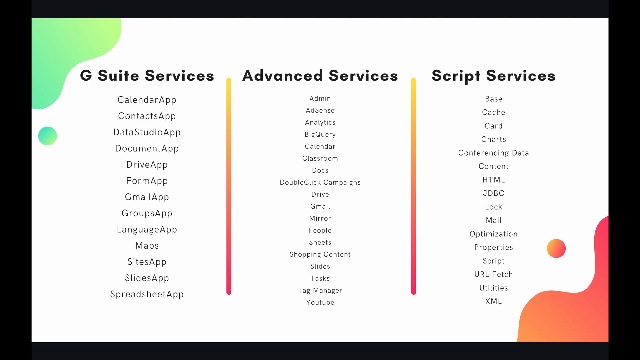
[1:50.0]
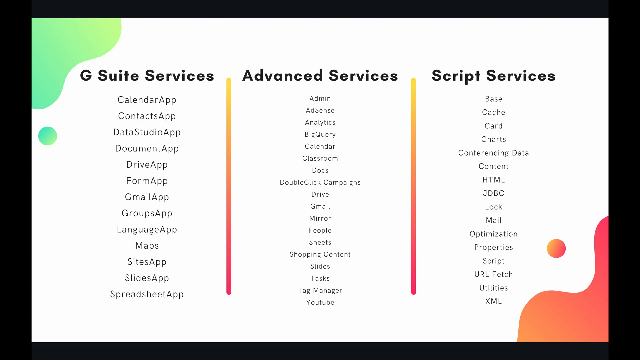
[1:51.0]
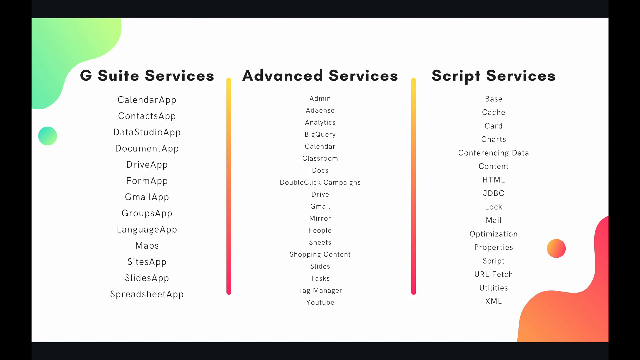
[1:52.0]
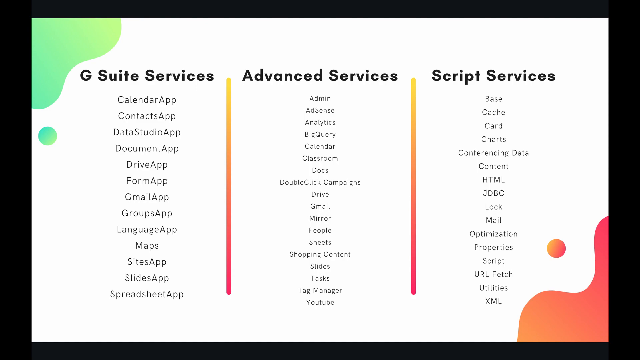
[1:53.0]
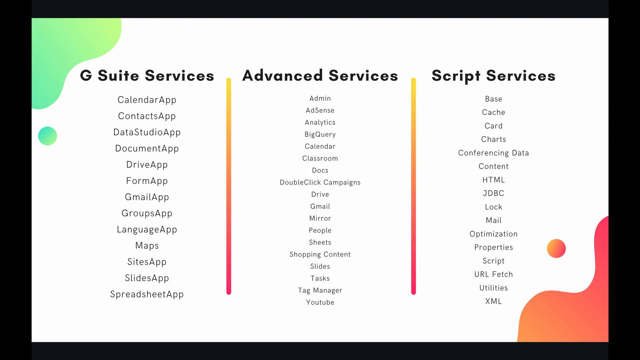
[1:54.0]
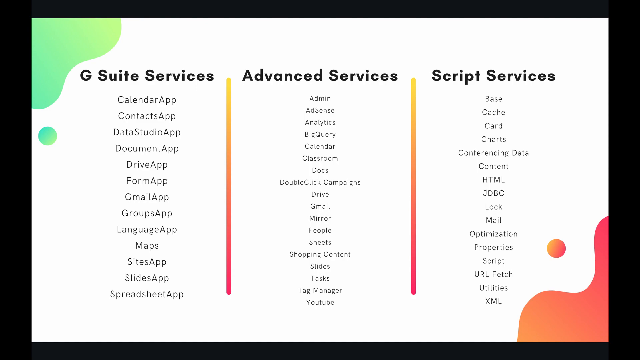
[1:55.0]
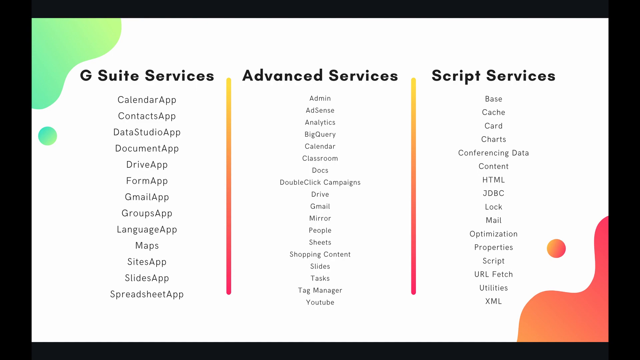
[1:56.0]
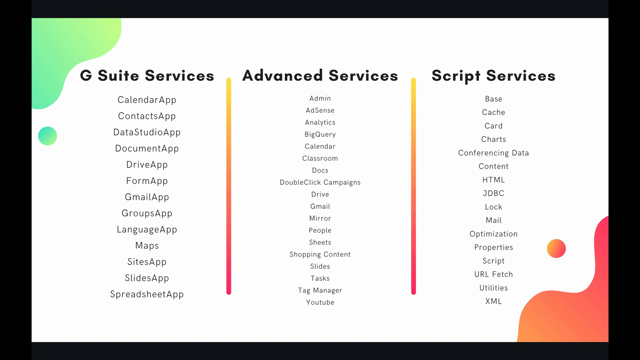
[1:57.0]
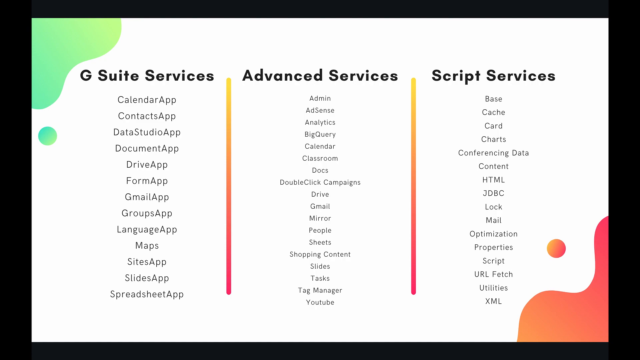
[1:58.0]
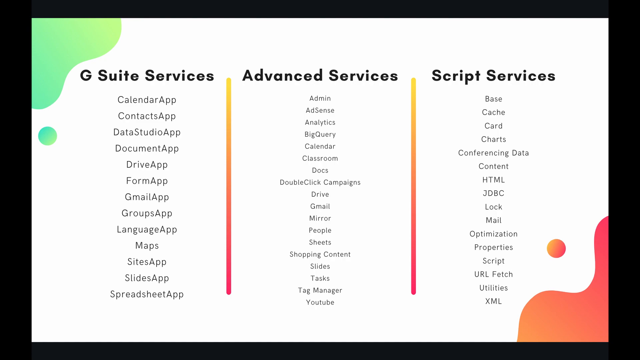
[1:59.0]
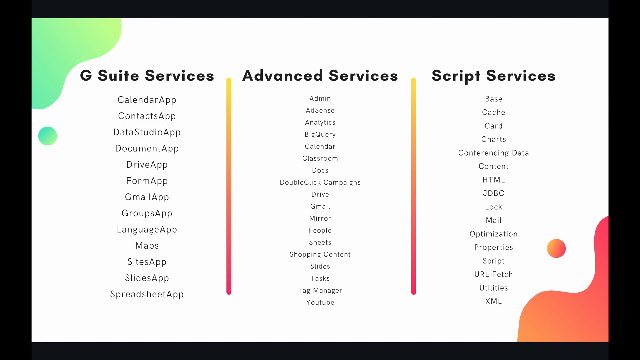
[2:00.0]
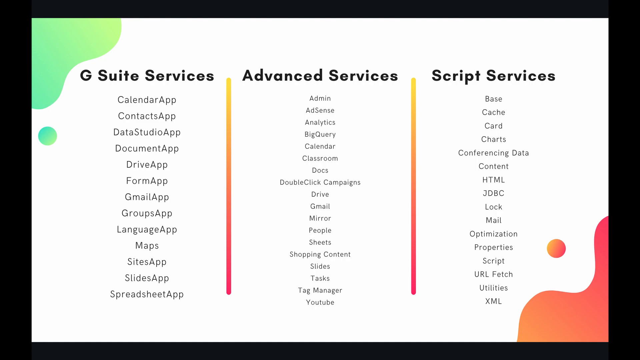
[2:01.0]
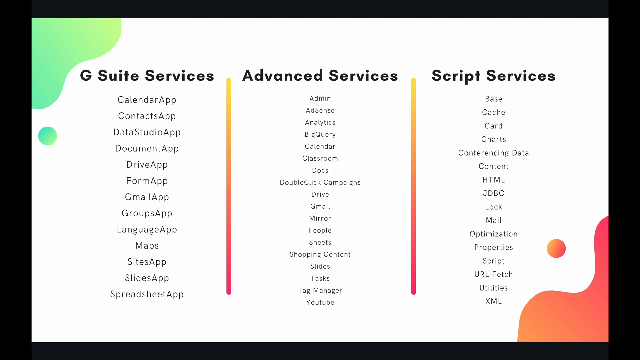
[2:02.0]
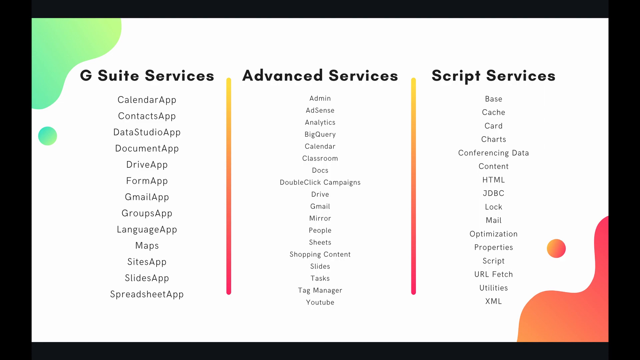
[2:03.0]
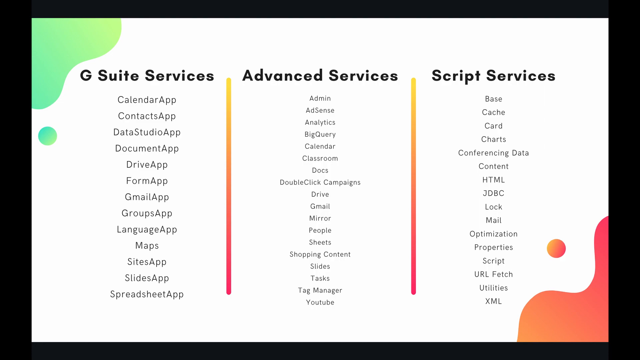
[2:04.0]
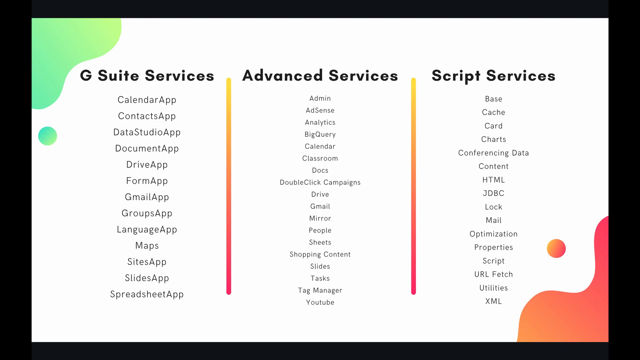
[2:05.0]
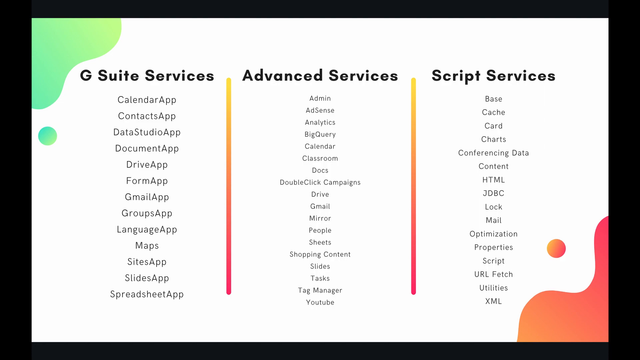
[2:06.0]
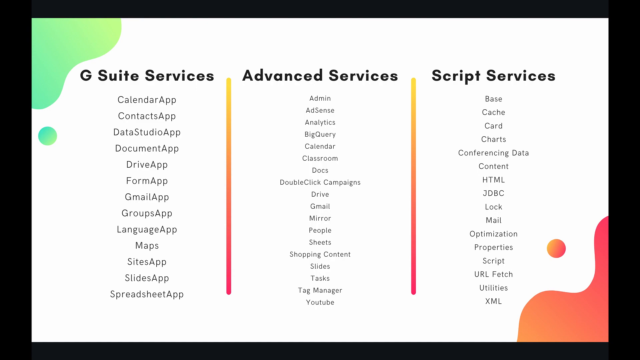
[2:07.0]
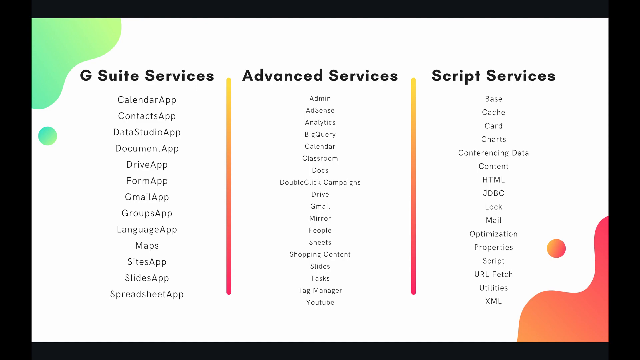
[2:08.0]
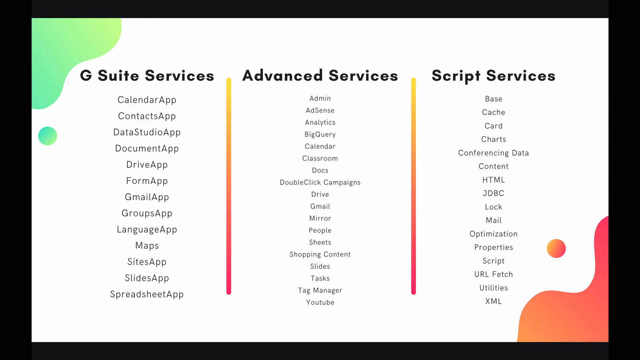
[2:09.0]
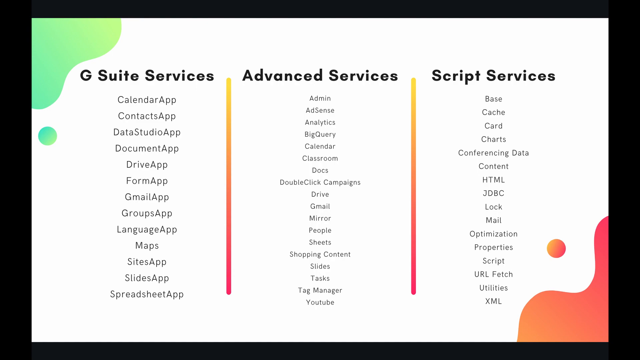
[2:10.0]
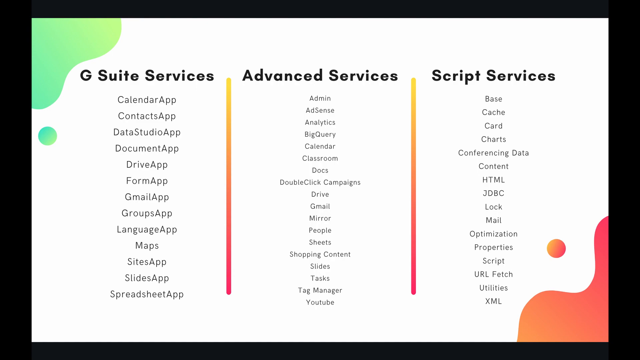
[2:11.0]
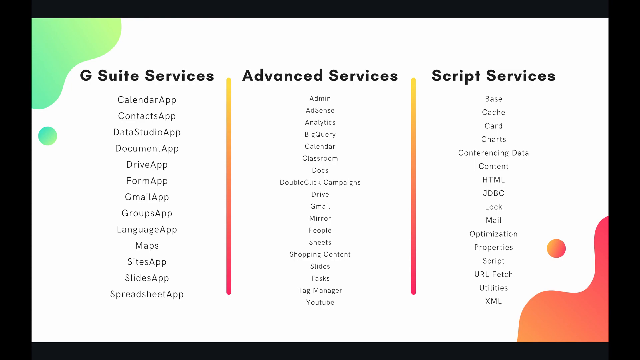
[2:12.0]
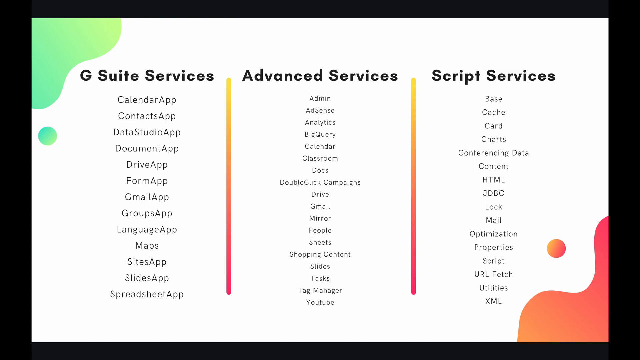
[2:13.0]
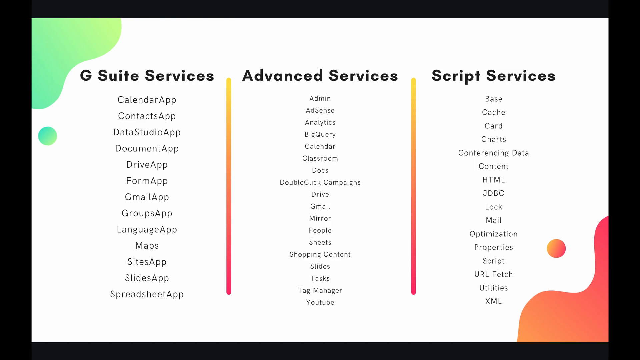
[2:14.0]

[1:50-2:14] One slide on a white background stays on screen the entire time. In the top left corner is an aqua green blob with a small aqua green circle underneath. In the lower right corner is another blob, reddish-orange, with a reddish-orange circle floating to its left and above it. Each blob has an indentation in the center, so each looks like two hills. The slide has three columns with bolded titles: "G Suite Services" on the left, "Advanced Services" in the middle, and "Script Services" on the right. Between the columns are vertical lines that start yellow at the top and get more red going down. Each column has a list of services and apps. Under G Suite Services are Calendar App, Contacts App, Data Studio App, Documents App, Drive App, Form App, Gmail App, Groups App, Language App, Maps, Sites App, Slides App, Spreadsheet App. Under Advanced Services are Admin, AdSense, Analytics, BigQuery, Calendar, Classroom, Docs, DoubleClick Campaigns, Drive, Gmail, Mirror, People, Sheets, Shopping Content, Slides, Tasks, Tag Manager, YouTube. Under Script Services are Base, Cache, Card, Charts, Conferencing Data, Content, HTML, JDBC, Lock, Mail, Optimization, Property, Script, URL Fetch, Utilities, and XML.